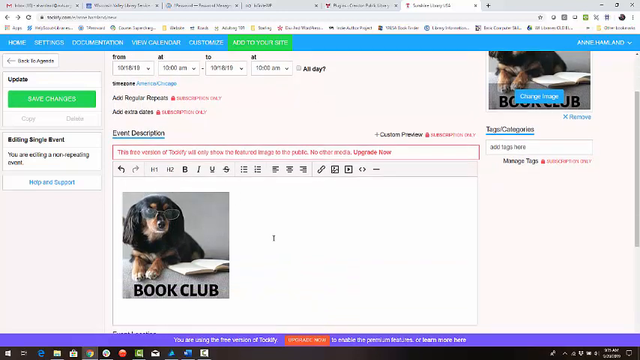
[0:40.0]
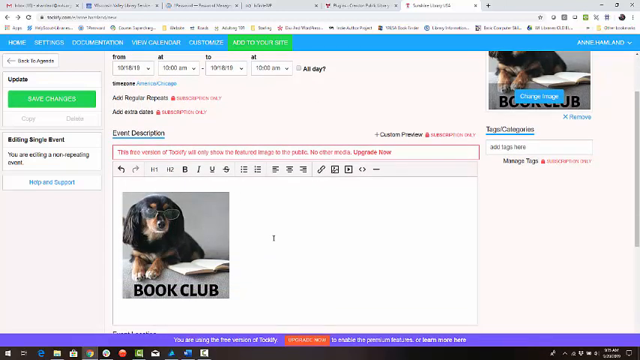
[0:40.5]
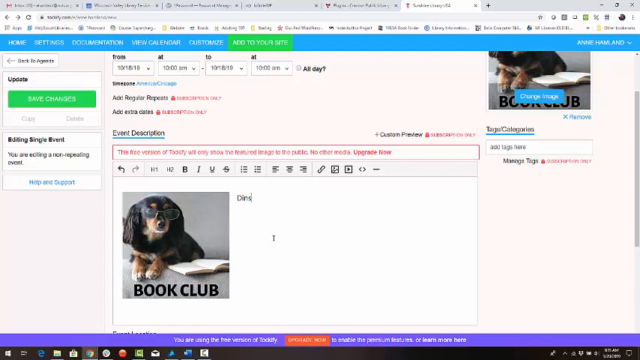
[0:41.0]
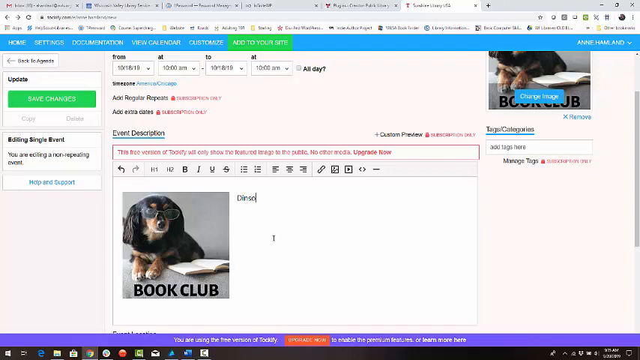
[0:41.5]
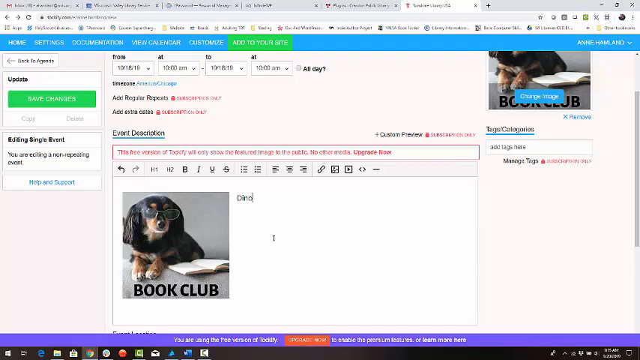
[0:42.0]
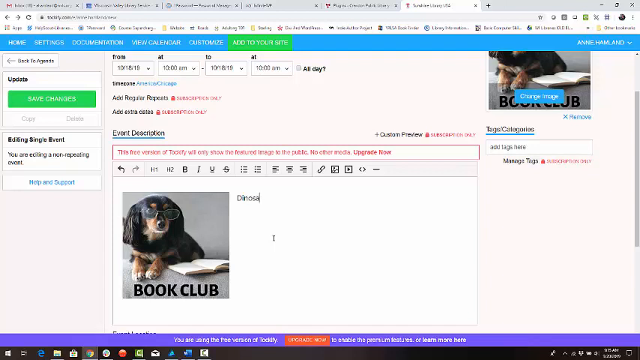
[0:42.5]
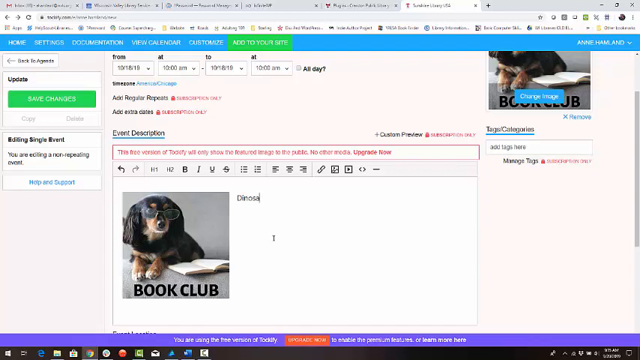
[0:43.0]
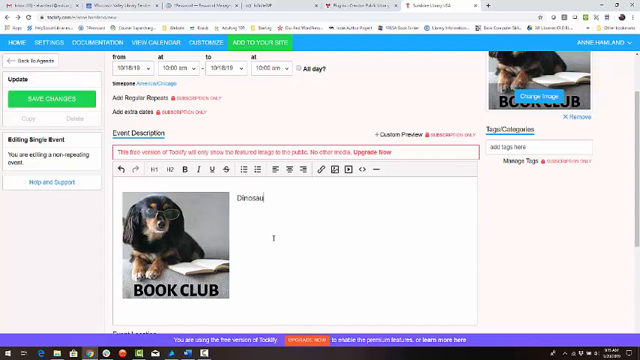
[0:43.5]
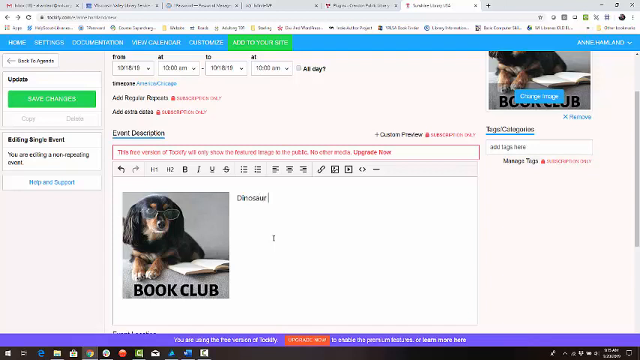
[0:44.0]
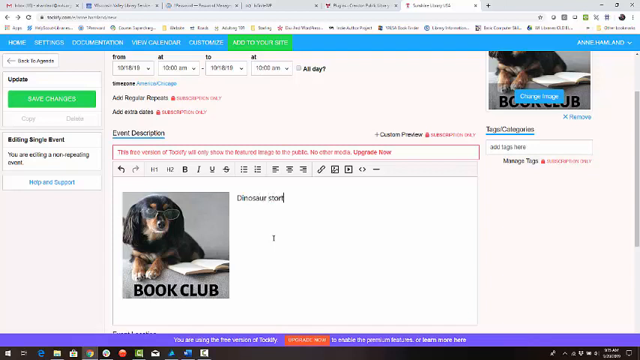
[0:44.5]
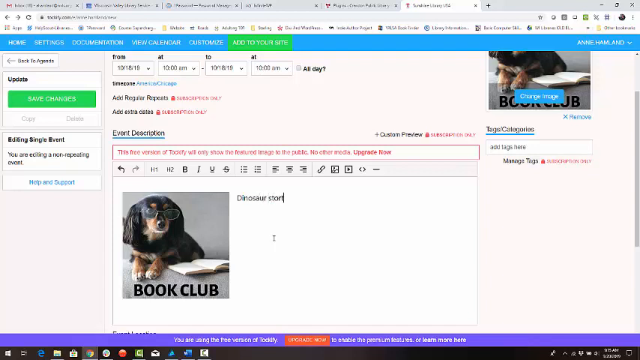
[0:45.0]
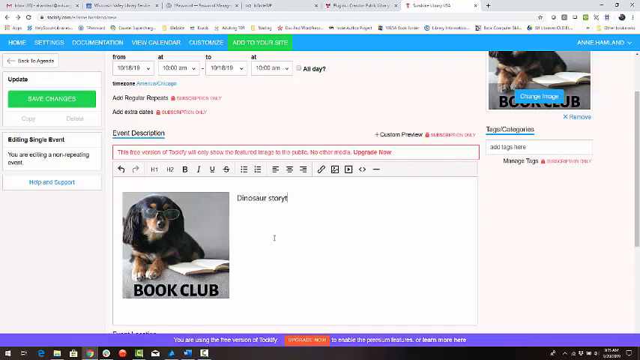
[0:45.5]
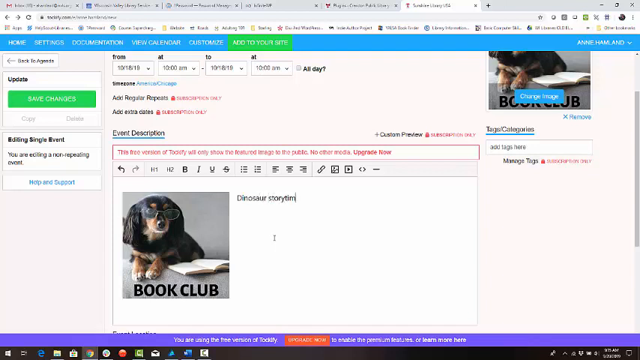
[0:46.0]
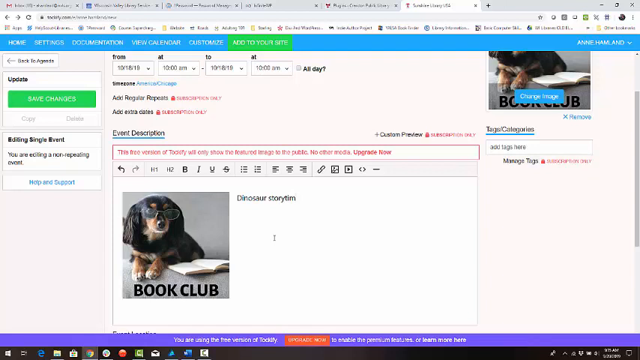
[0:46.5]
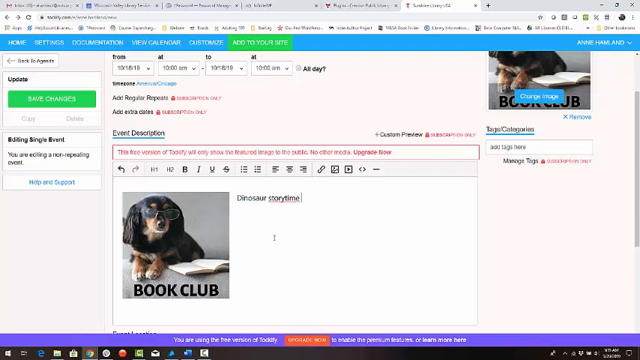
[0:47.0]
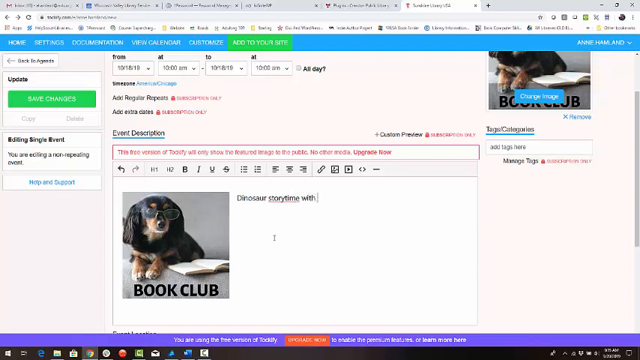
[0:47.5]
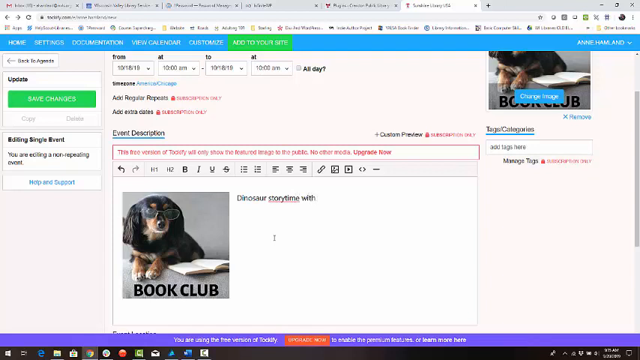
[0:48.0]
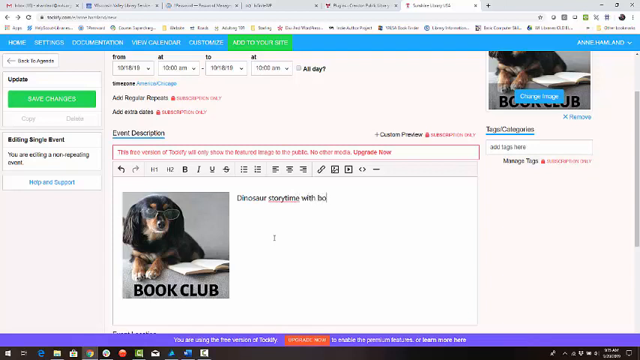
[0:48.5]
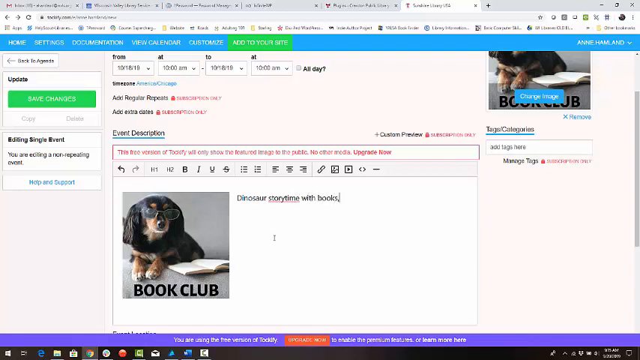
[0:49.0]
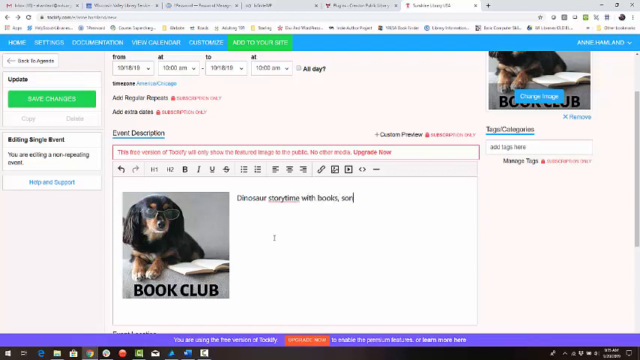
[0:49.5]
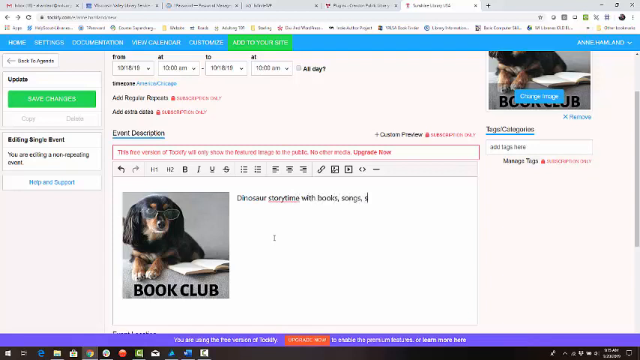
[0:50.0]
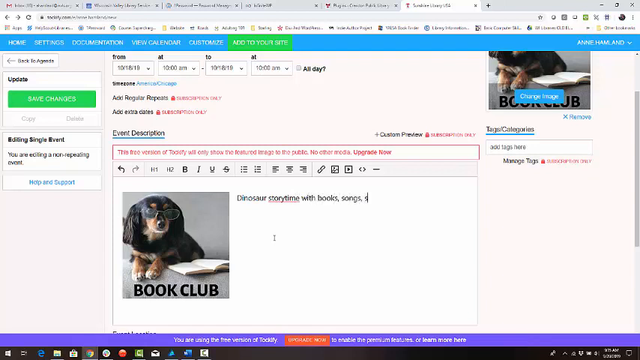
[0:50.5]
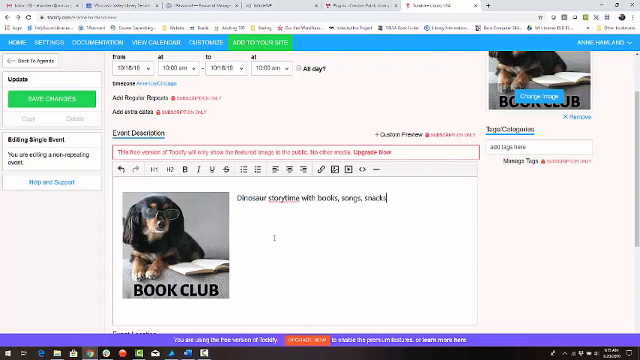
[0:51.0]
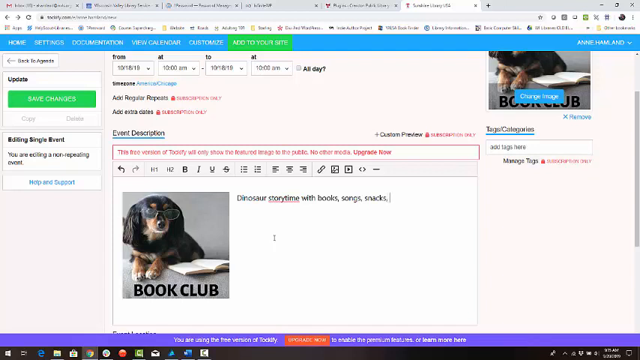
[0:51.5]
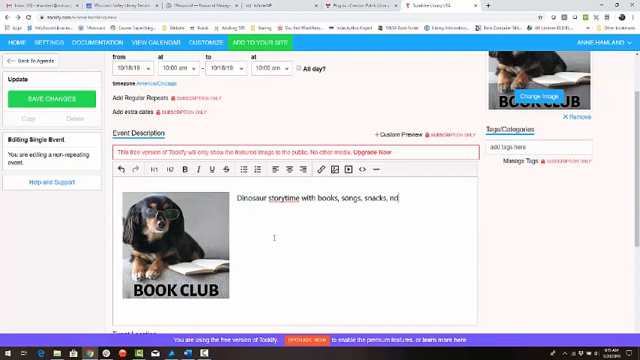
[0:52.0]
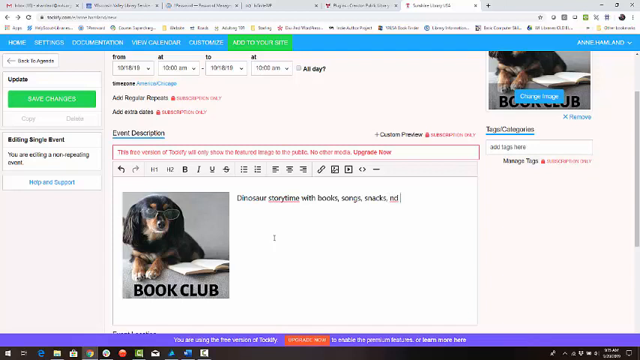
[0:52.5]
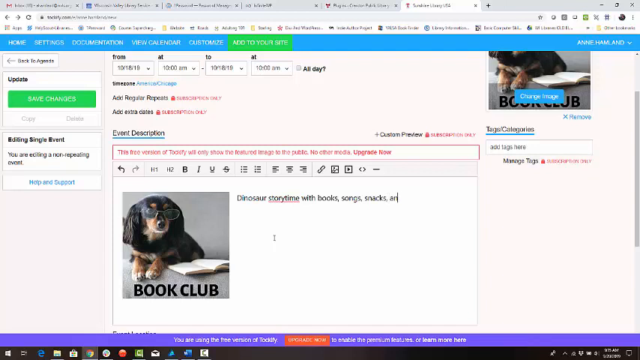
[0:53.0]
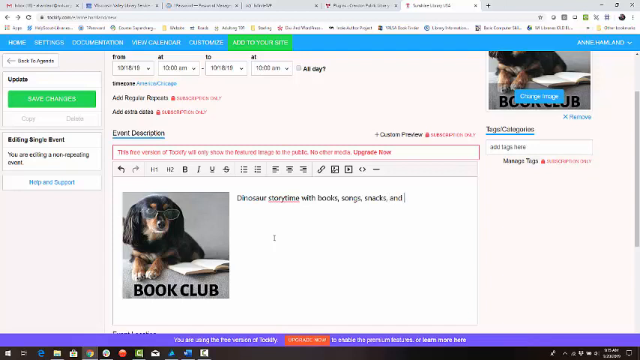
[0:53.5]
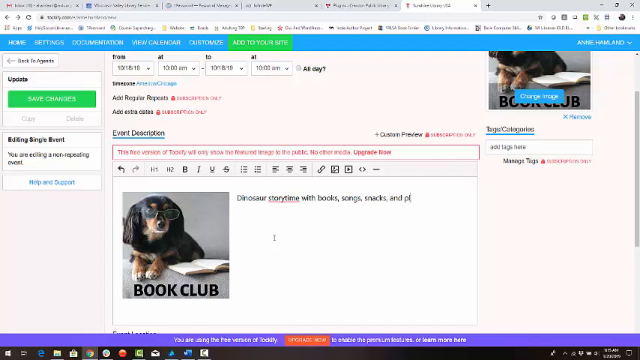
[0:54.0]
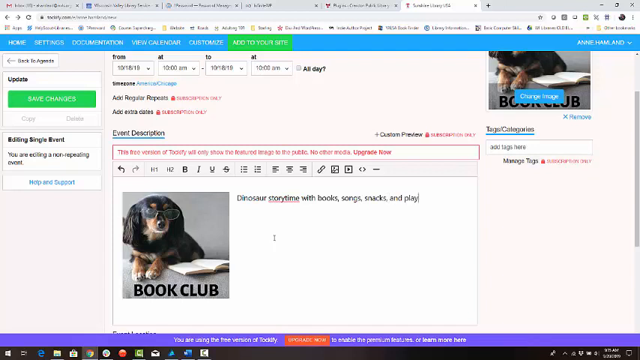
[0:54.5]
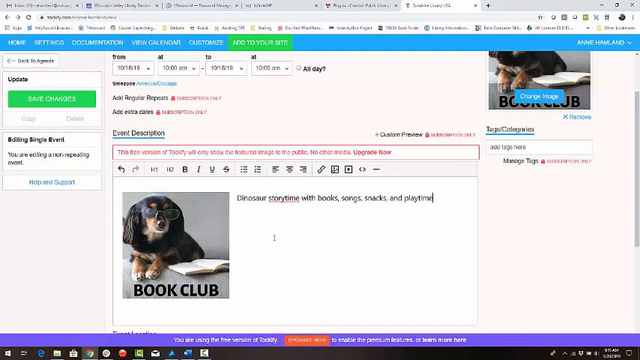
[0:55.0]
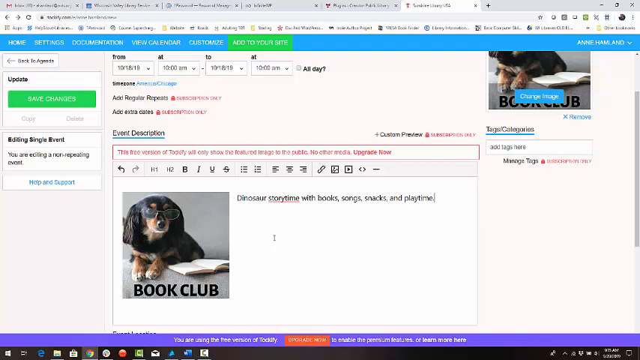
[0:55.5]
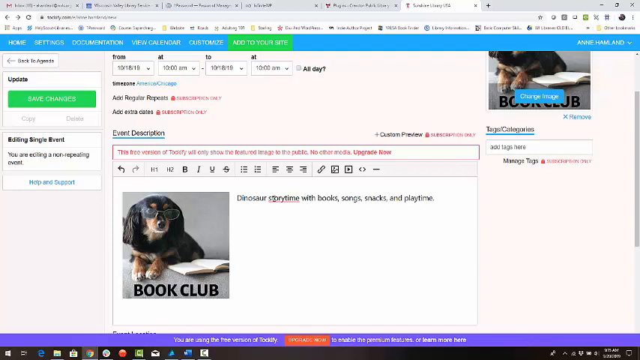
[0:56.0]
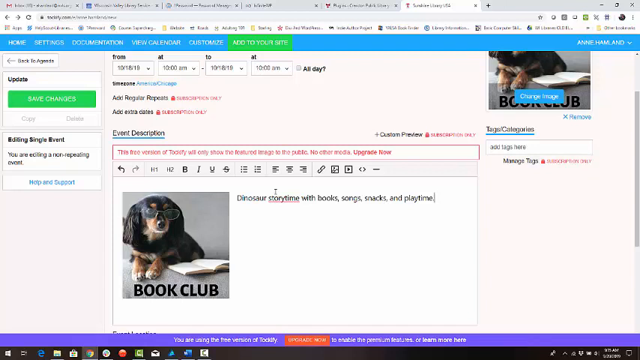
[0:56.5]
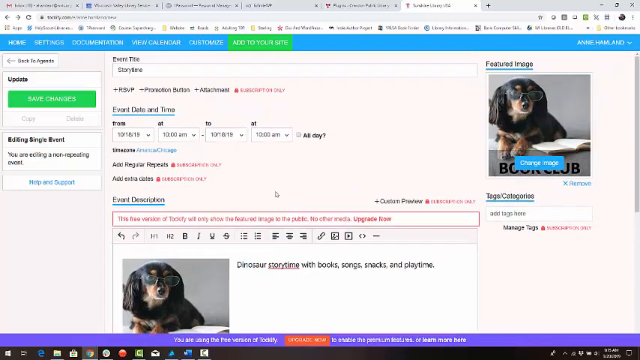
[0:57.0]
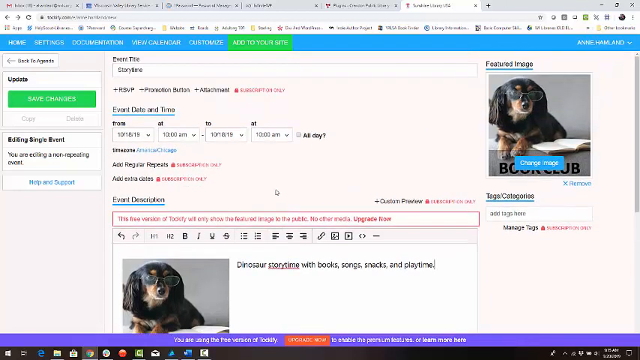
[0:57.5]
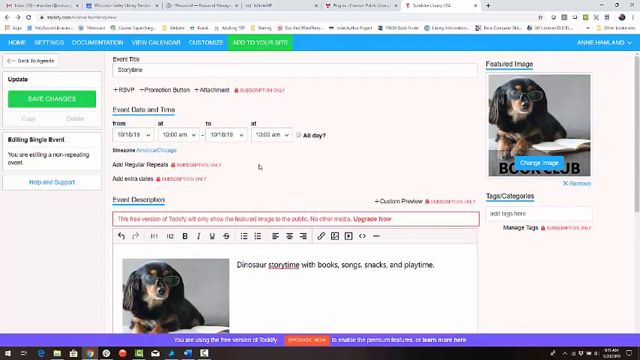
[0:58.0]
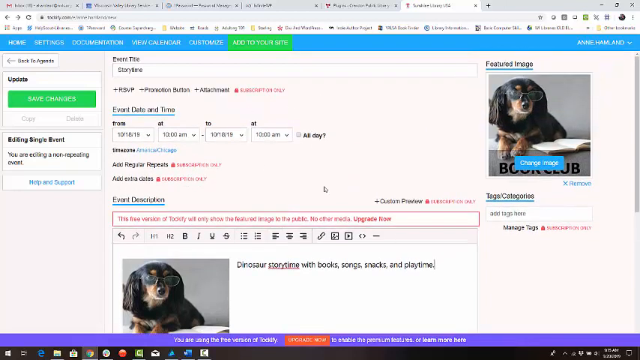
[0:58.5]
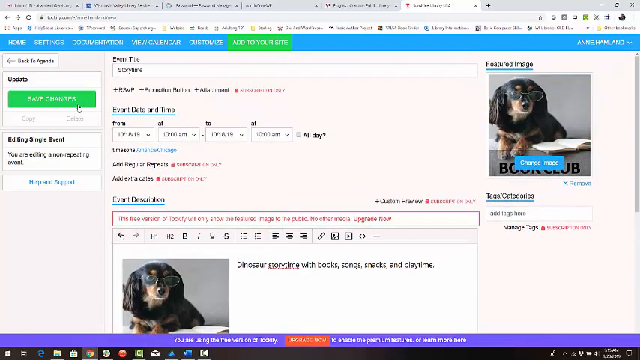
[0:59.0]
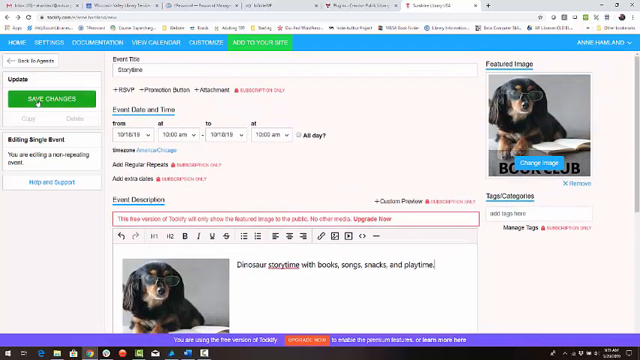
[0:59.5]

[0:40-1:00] The website contains a word processor with a picture of a dog and, underneath it, black text reading "book club." To the right, a person types in black text, seemingly writing a full sentence. They scroll up and click a green button on the top left side. A bar at the top of the screen is now highlighted in green, and they keep typing in the word processor, apparently writing a full sentence like a description. They scroll up again and click the green button. While writing the description, they kind of erase some of it and rewrite it. The text reads "dinosaur story time with books, songs, snacks, and play time."